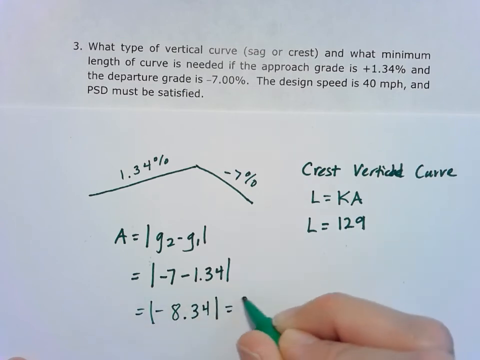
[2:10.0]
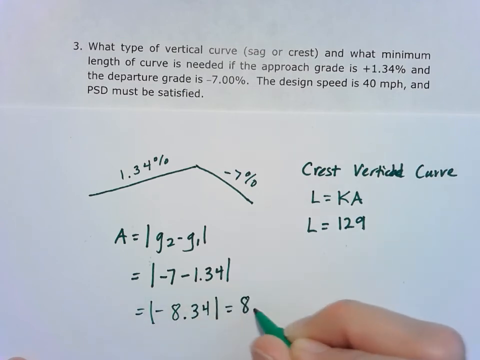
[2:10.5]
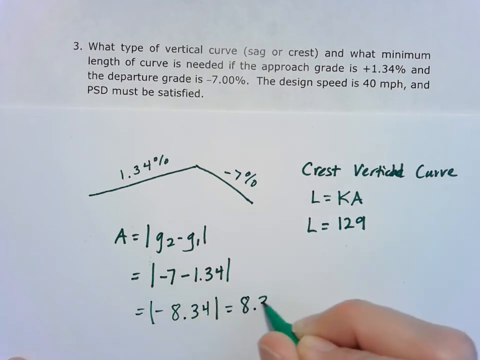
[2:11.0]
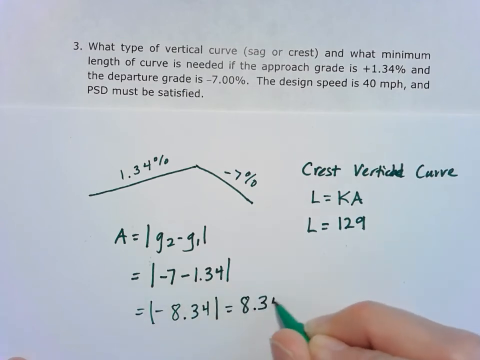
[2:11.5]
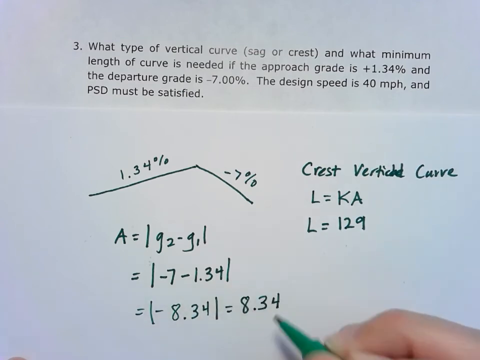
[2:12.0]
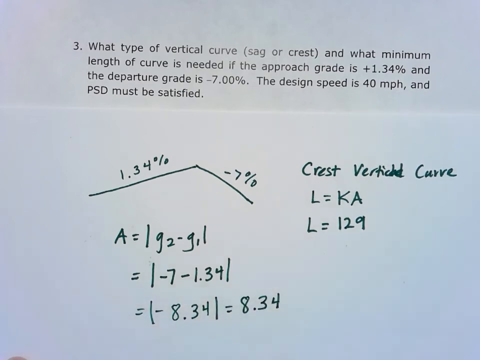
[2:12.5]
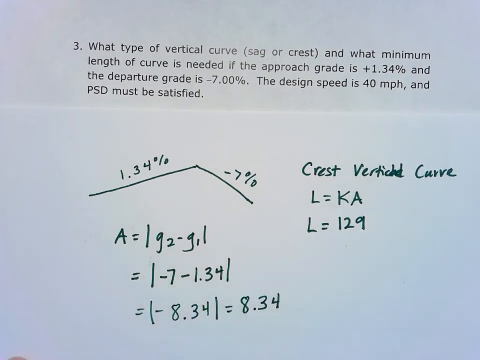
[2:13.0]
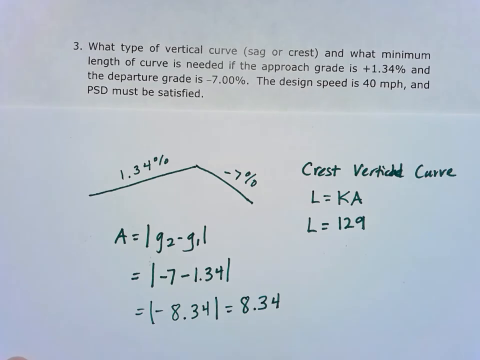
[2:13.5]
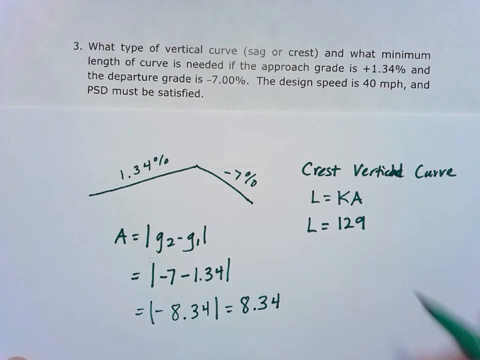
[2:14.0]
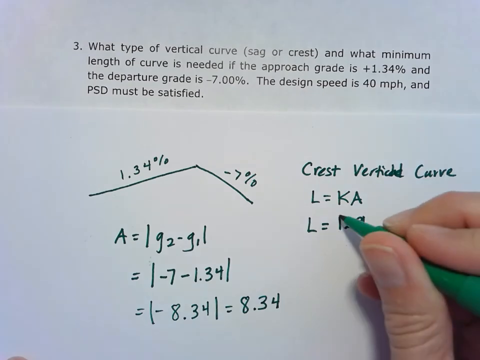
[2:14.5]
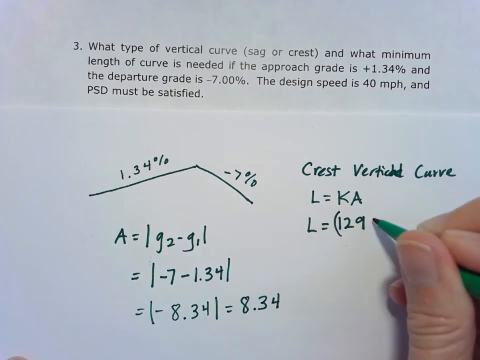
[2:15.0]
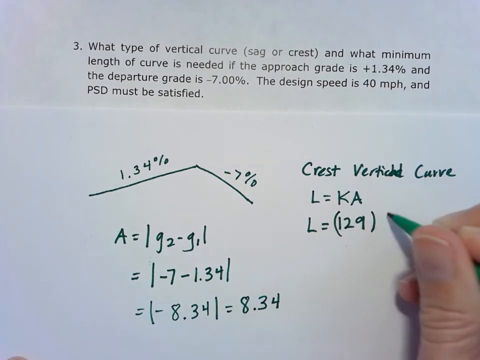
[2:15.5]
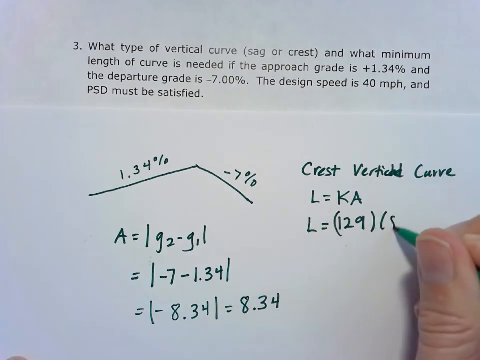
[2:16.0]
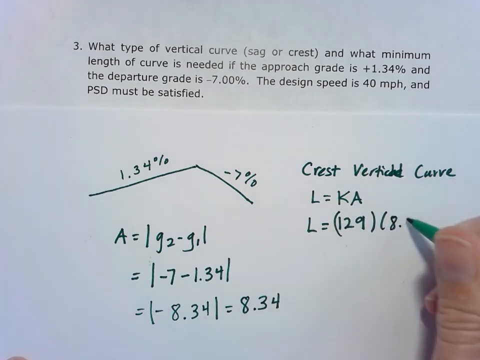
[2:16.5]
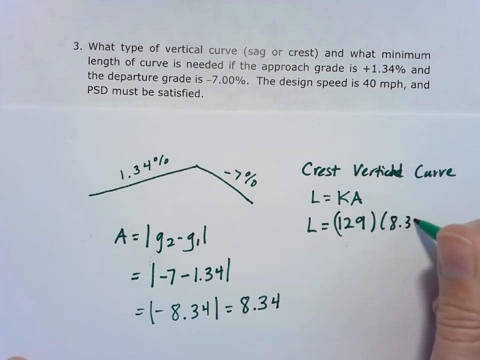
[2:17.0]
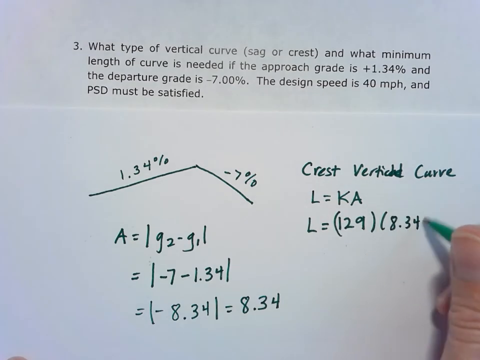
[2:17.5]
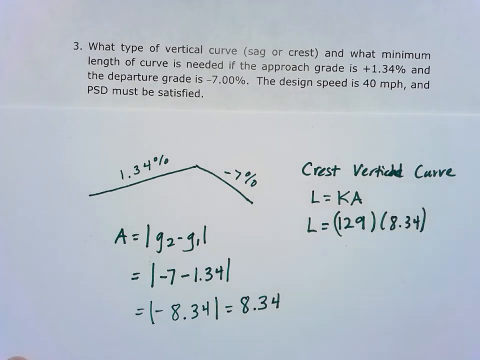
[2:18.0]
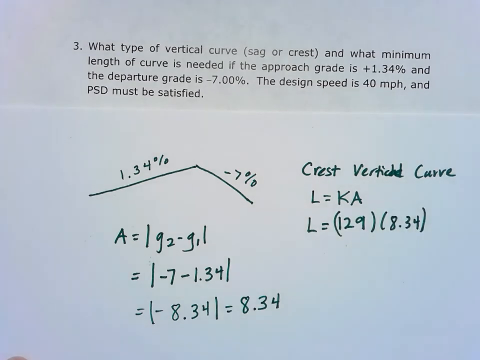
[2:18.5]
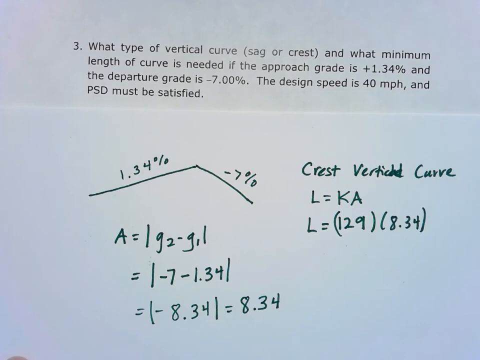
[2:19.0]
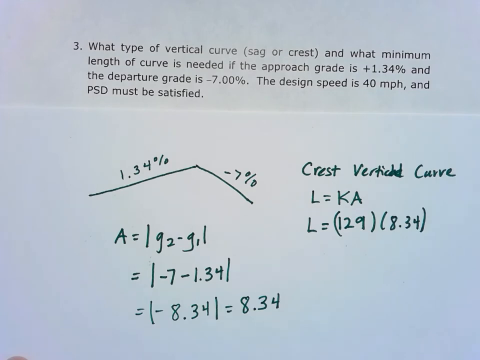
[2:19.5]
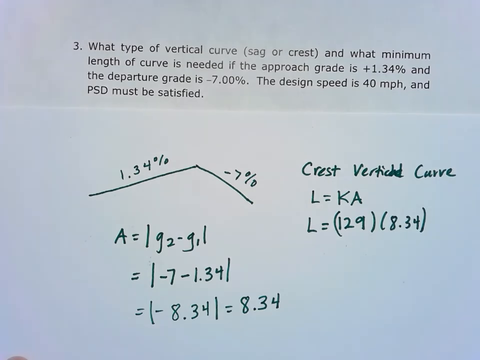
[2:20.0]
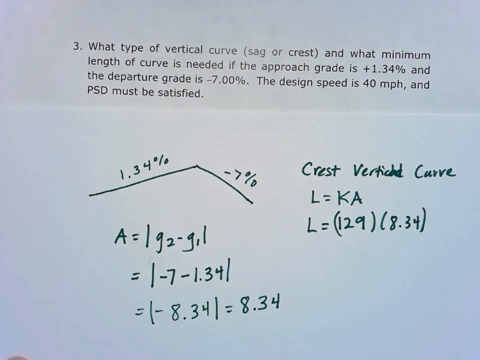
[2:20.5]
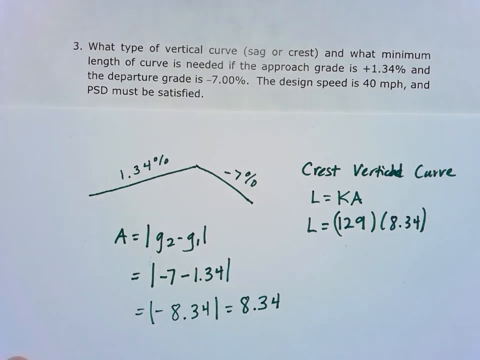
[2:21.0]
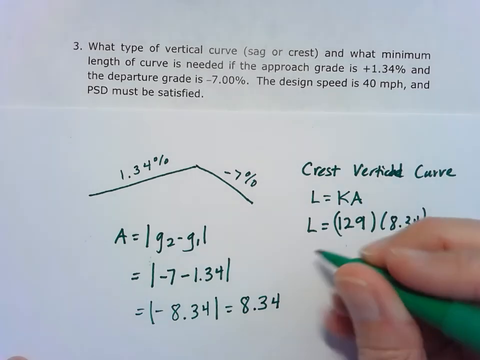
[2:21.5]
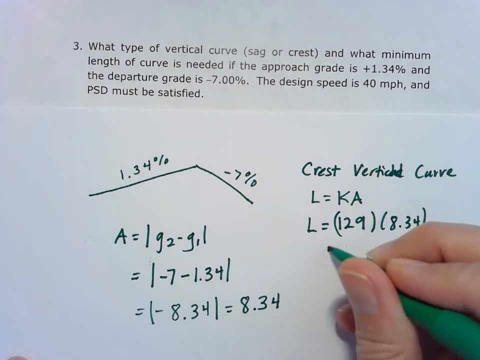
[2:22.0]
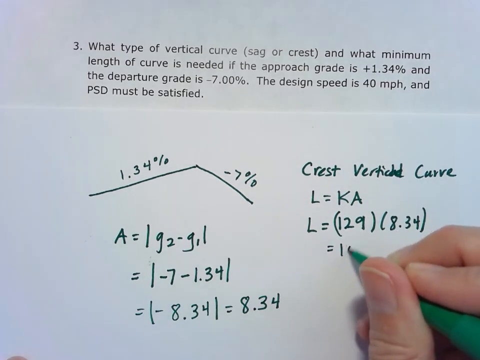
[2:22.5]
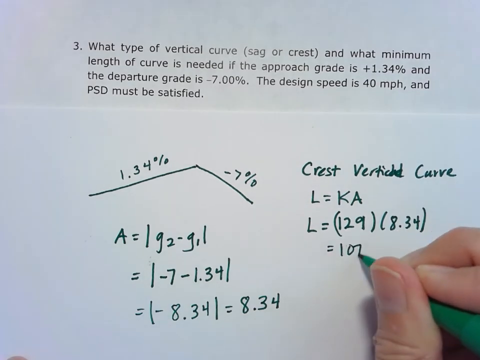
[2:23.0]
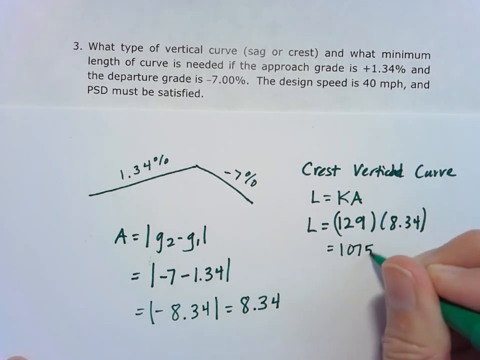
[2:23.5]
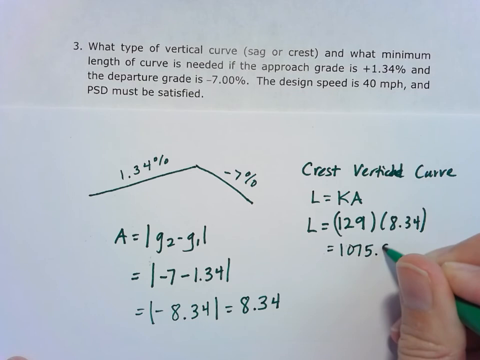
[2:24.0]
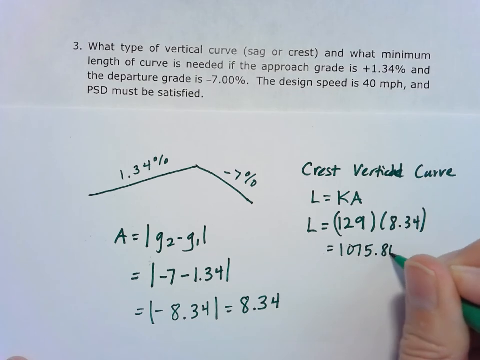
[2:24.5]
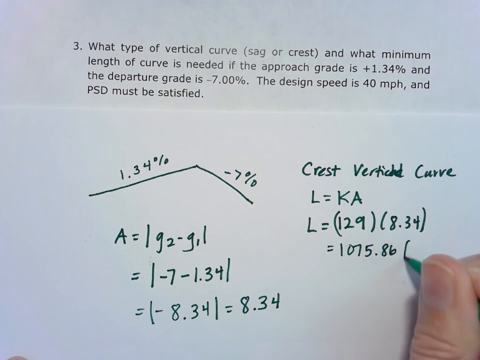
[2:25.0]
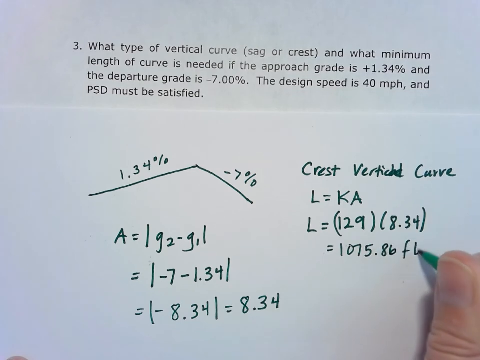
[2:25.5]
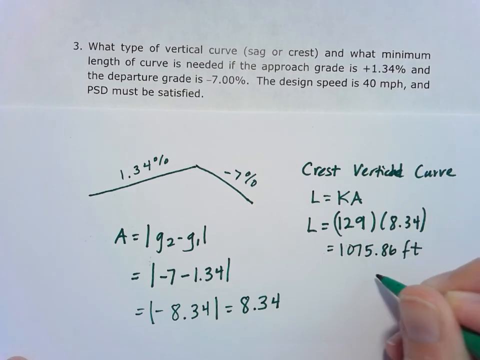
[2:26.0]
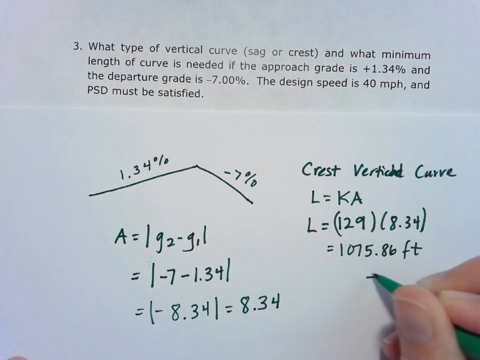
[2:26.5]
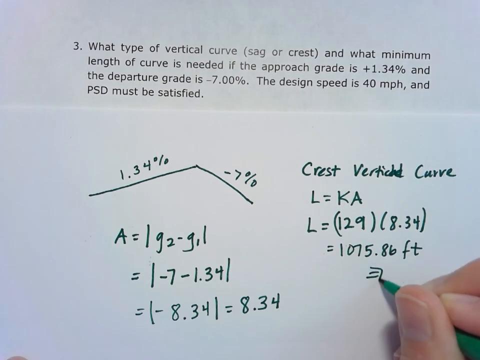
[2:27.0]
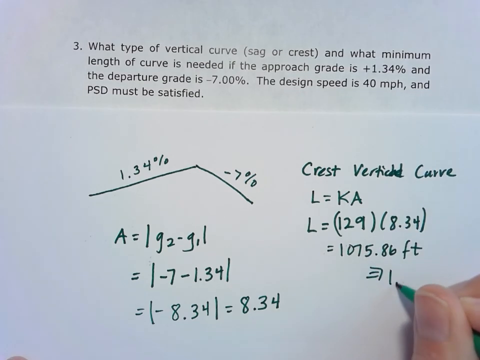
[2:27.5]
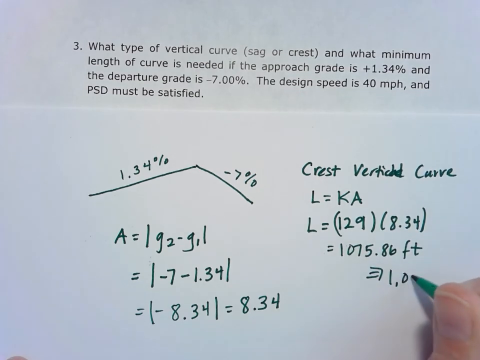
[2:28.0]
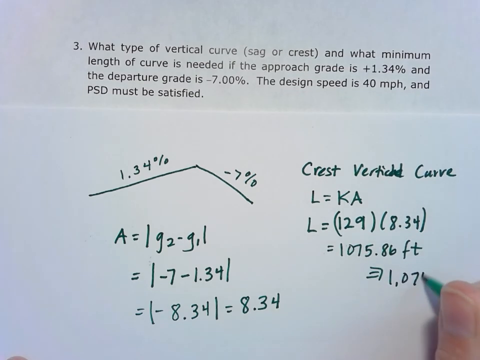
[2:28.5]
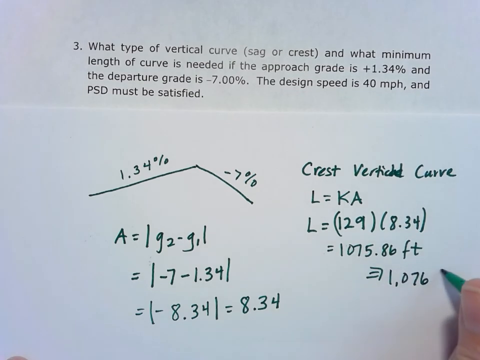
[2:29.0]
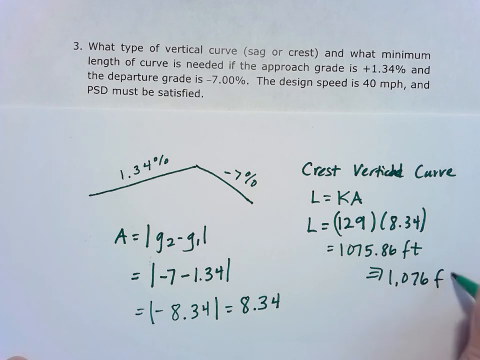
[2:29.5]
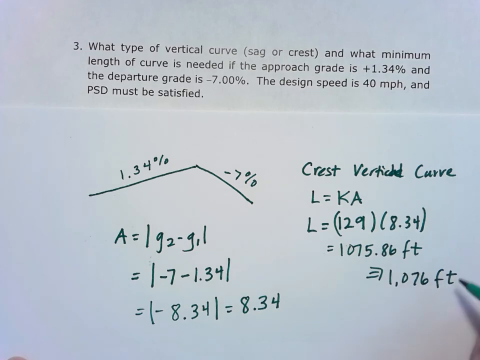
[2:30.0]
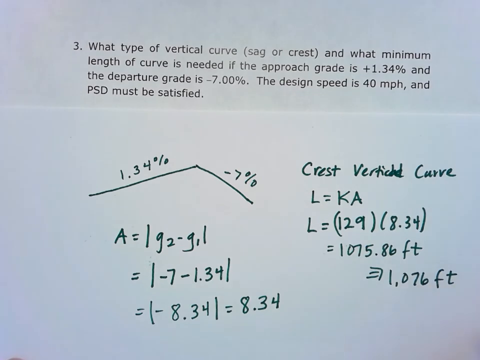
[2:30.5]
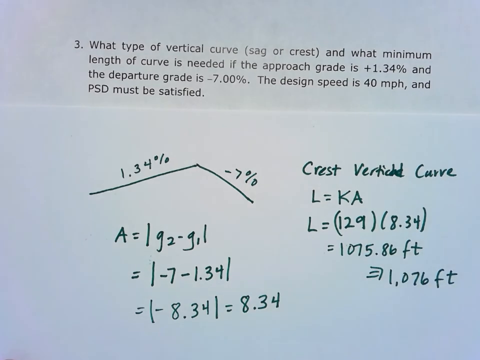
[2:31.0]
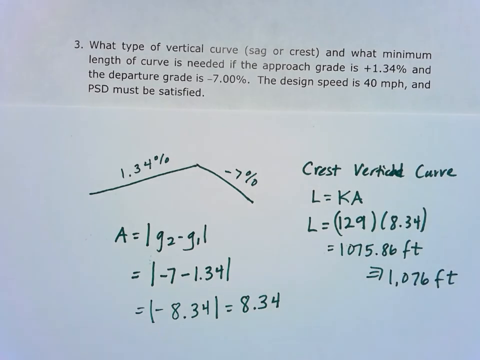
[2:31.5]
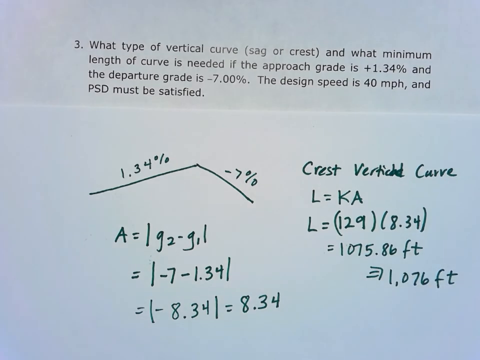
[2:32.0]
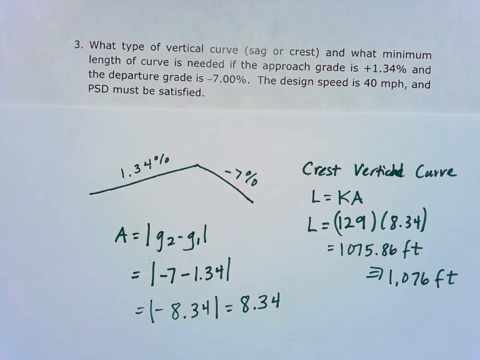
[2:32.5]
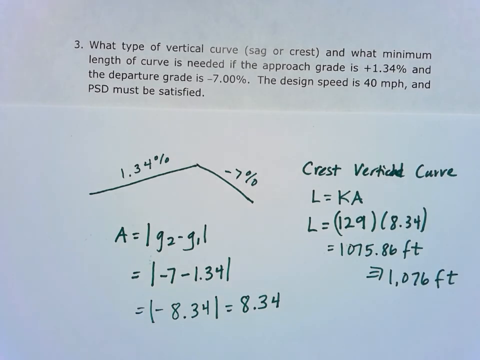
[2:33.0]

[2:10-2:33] A person's right hand holding a green felt-tip pen does the calculations on the white paper, with the question printed in black at the top. It has just written 8.34 next to "L = 129" and places brackets around the values 129 and 8.34 on the right side under the text "Crest Vertical Curve". On a new line it writes "1075.86 ft", which rounds up to "1,076 ft", indicating that this is the answer to the question at the top of the page.